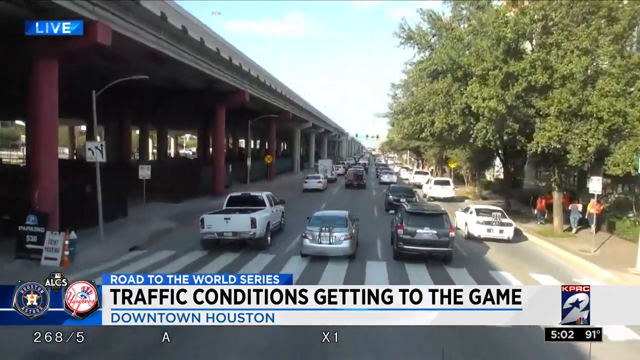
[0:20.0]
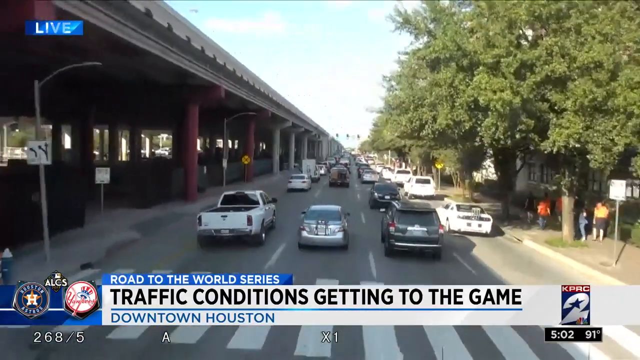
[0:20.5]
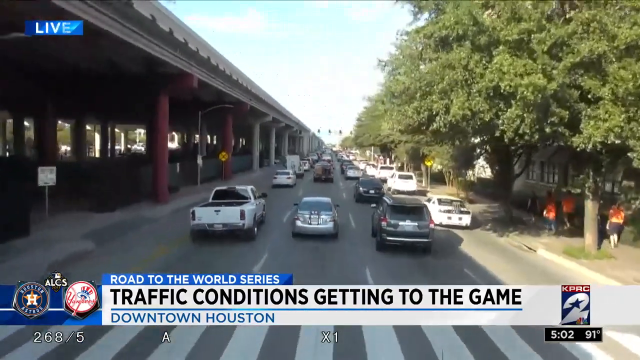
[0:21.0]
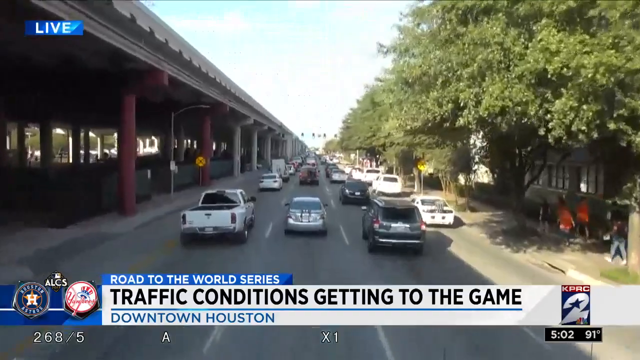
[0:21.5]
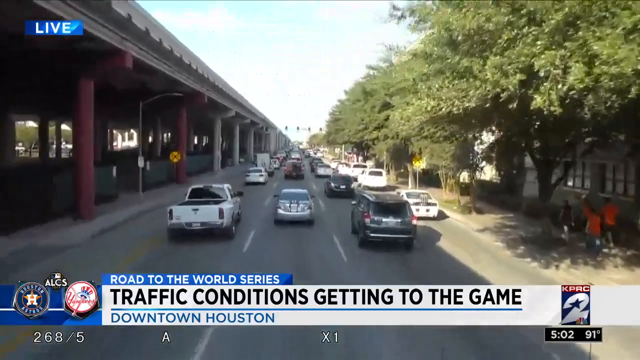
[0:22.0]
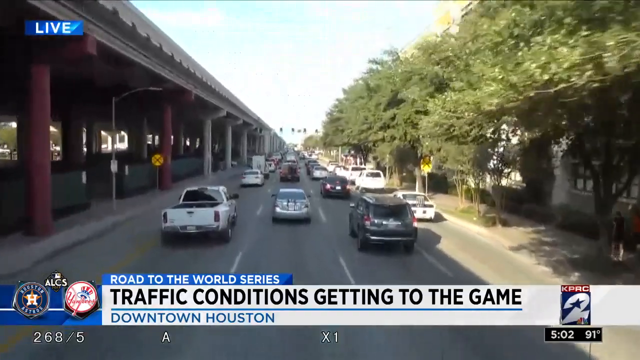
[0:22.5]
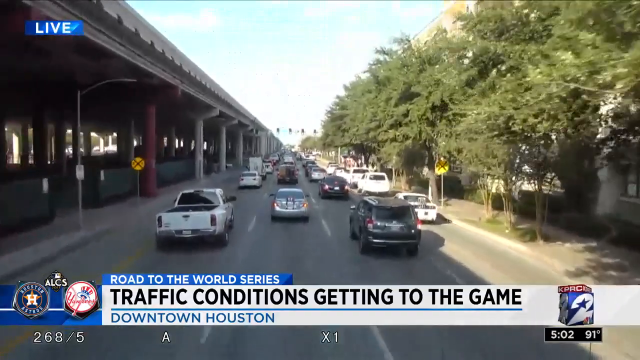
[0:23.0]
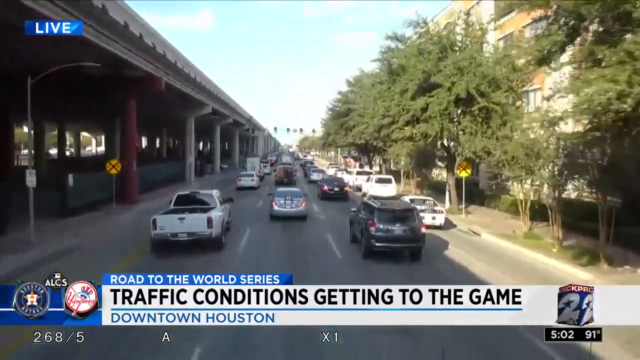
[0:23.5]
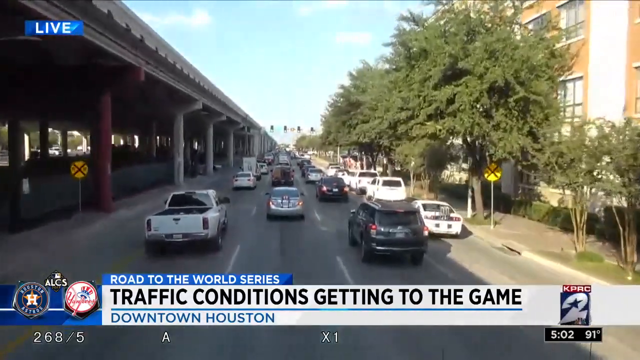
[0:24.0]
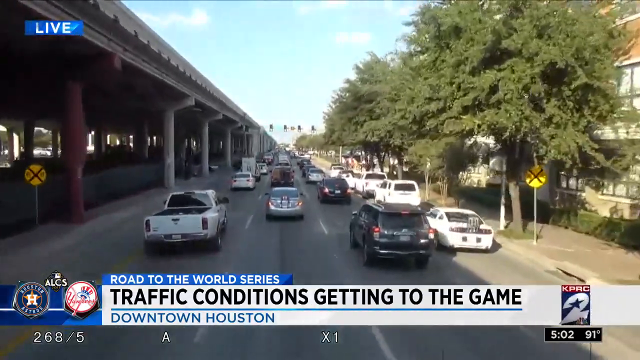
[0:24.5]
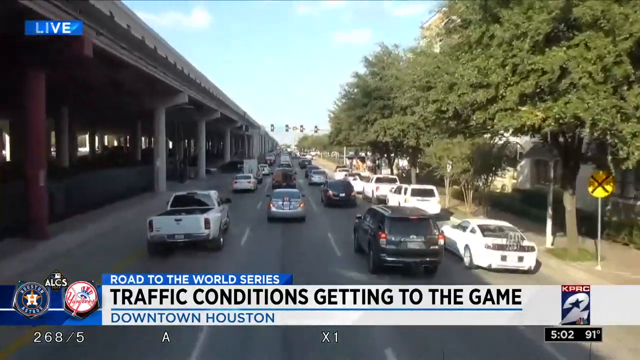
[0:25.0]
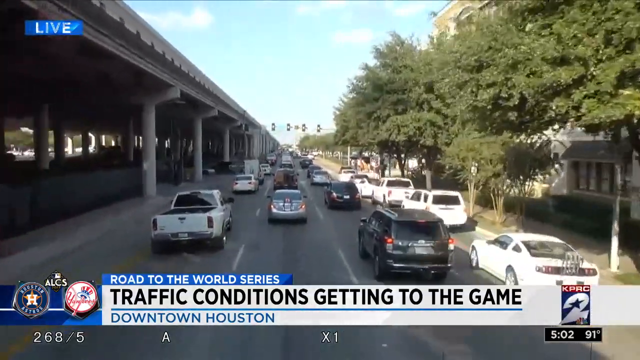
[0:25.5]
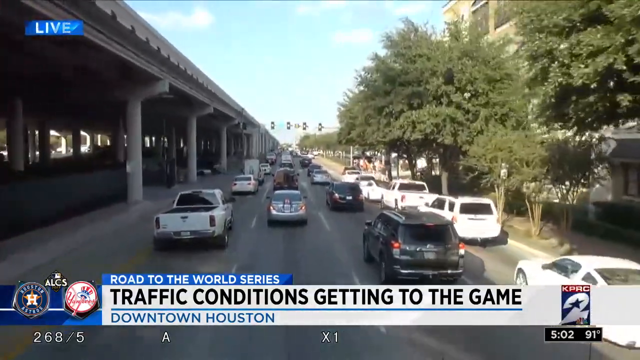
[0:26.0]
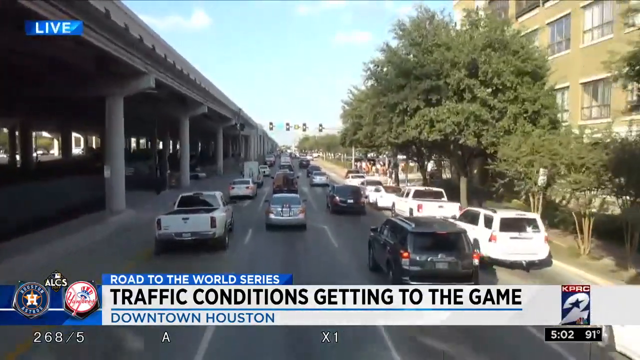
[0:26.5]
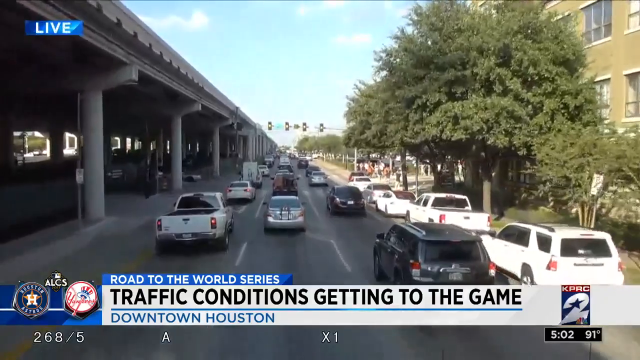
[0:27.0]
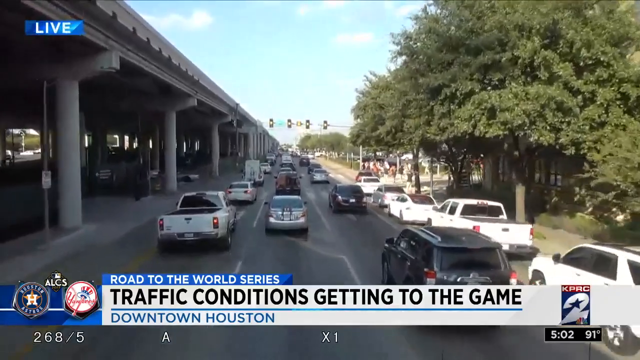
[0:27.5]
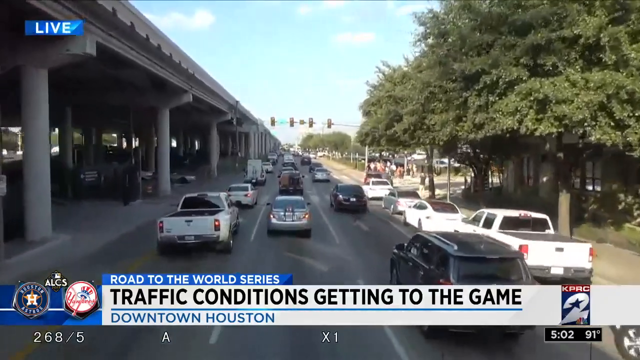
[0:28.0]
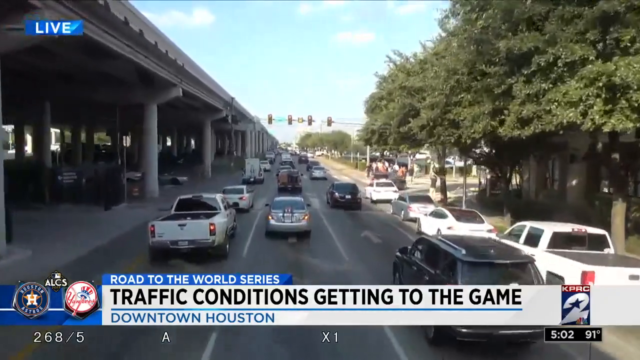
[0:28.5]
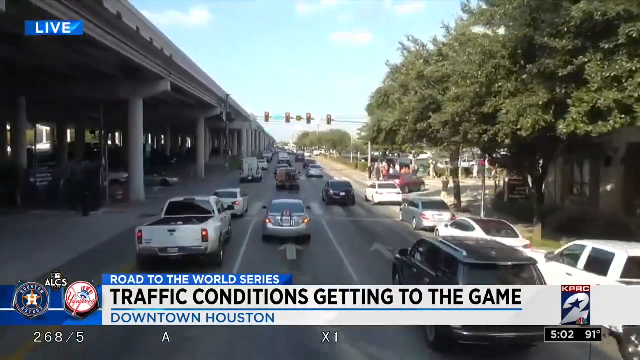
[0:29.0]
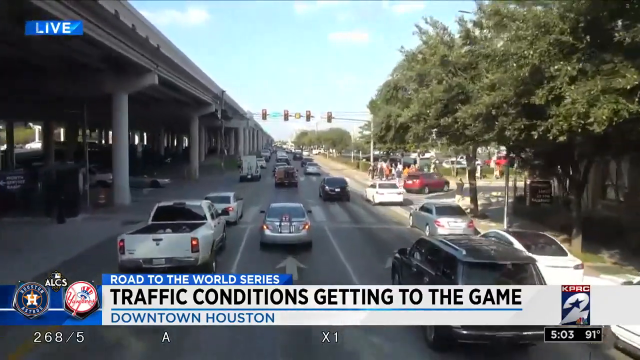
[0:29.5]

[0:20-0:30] A live shot shows the queues of traffic, clearly filmed from a vehicle merging into the traffic and following behind. The footage is shaky. There are trees and parked vehicles on the right. There are now three lanes of traffic, as cars in the far right lane wait to turn right. As the vehicle advances down the street, people walk towards the end of the road. There are four sets of traffic lights overhead. On the left is what seems to be a tram track. The cars start to slow down again. It is a sunny day with a blue sky and white clouds. A park comes up, with more crowds of people as the vehicle advances further down the road. The train track on the right is held up by red beams, and there are lampposts and markings on the road.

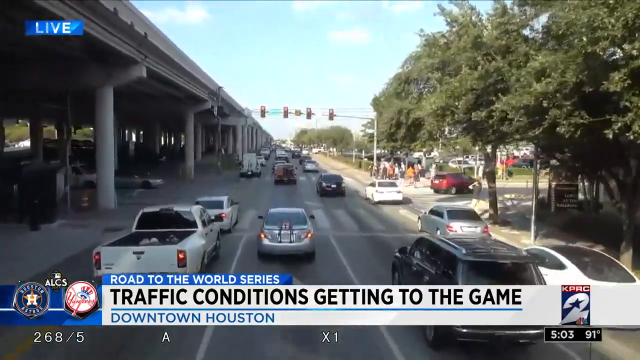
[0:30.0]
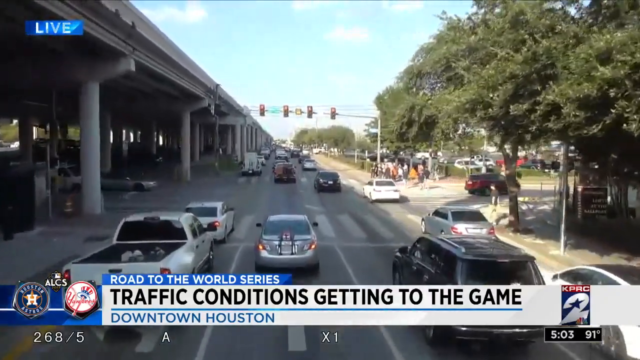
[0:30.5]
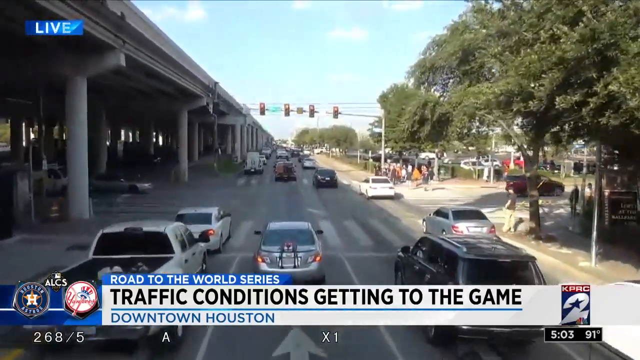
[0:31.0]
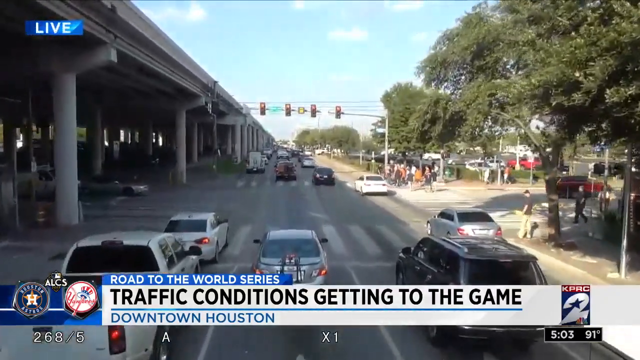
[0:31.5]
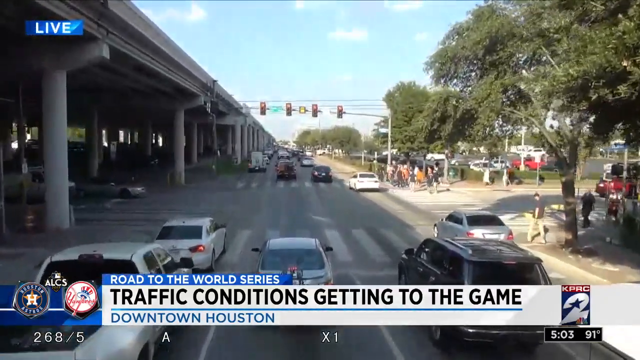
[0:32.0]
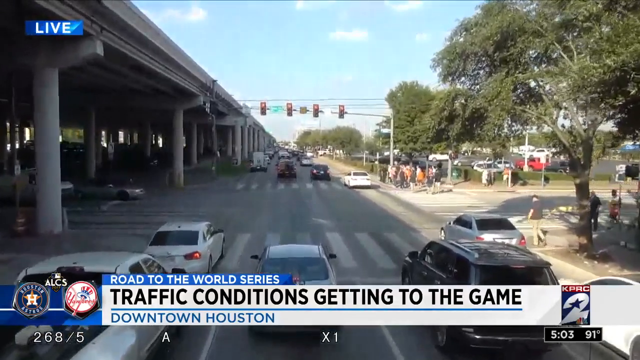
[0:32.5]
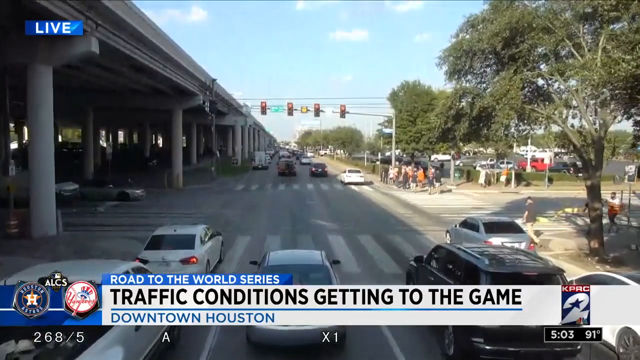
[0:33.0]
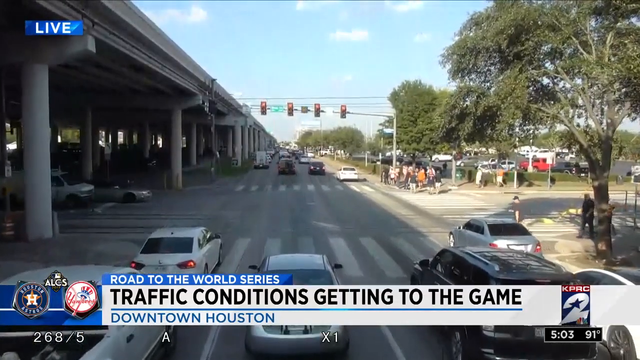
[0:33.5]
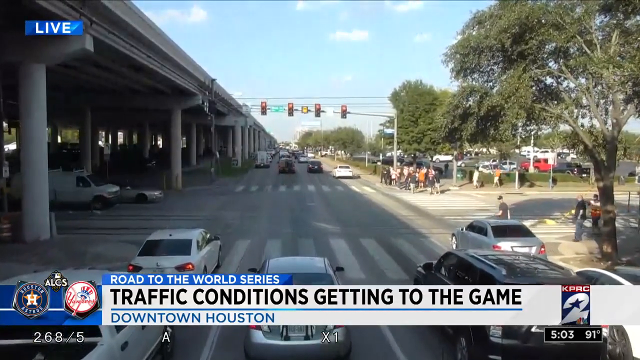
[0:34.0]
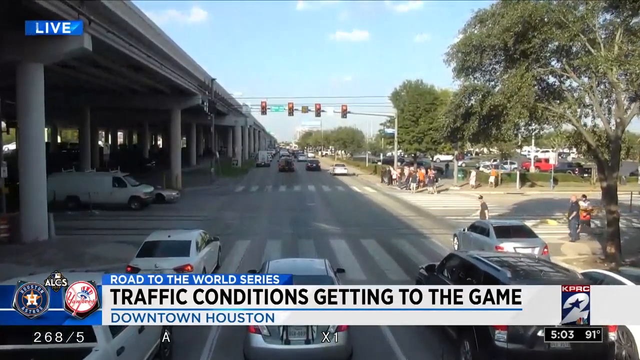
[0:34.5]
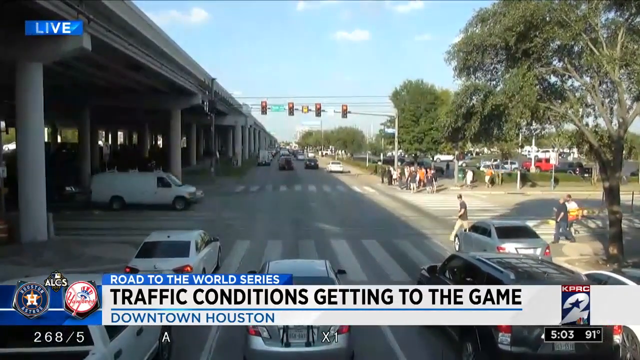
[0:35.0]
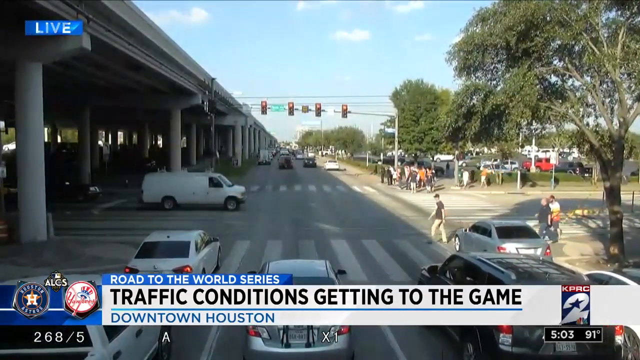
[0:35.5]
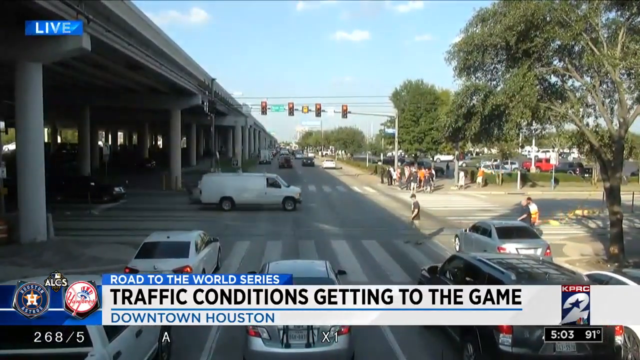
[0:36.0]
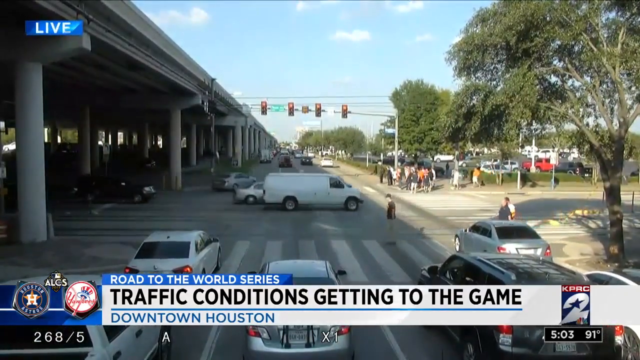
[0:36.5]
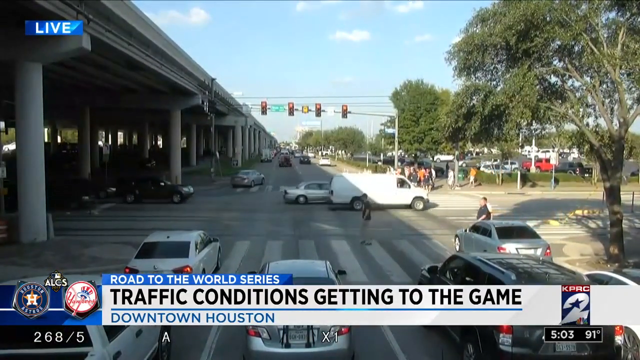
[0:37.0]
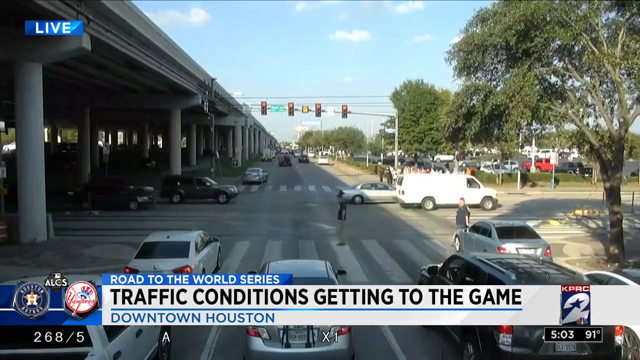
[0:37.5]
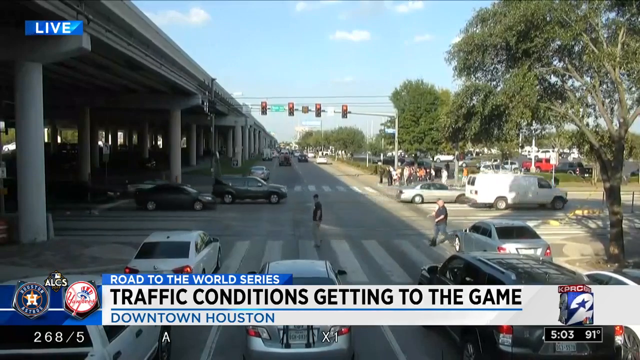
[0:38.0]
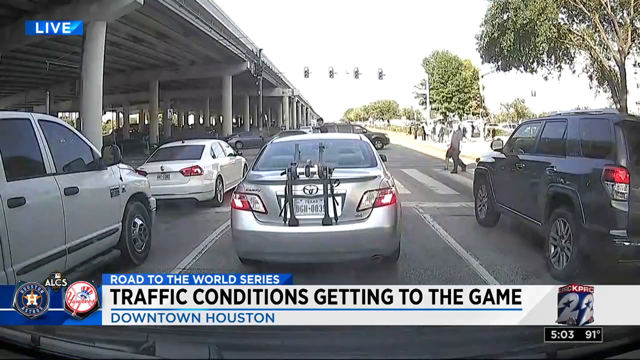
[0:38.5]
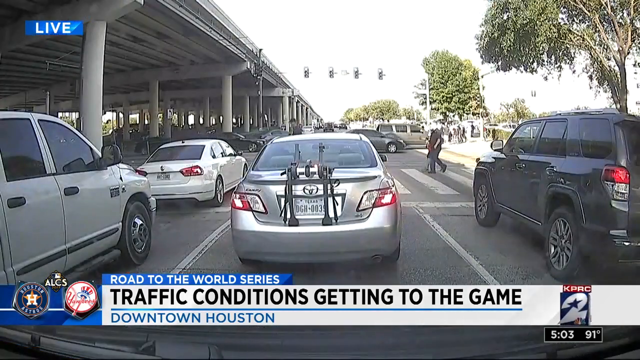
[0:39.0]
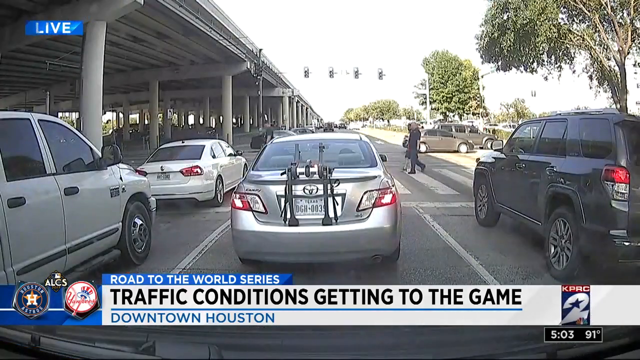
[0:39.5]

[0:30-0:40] The vehicle slows down as the cars in front of it stop because the lights have turned red. People cross at the crosswalk, the cars further ahead keep moving away, and vehicles from the left cross over. The shot pans to the car in front, a silver car with a bike rack. To the right is a black 4x4, and to the left is a white minivan with a white sedan in front of it. A crowd of people up ahead waits for the lights to change so they can cross. There appears to be a car park up ahead on the right. The ticker at the bottom reads "traffic conditions get into the game downtown Houston".